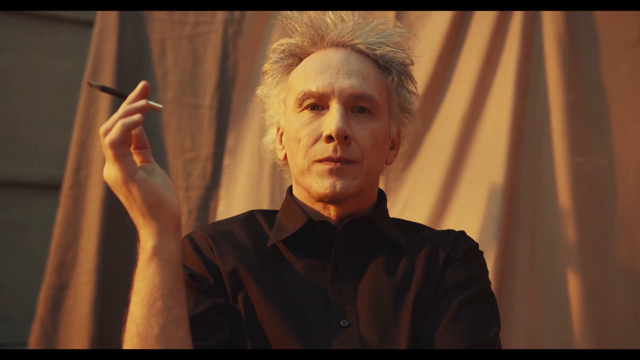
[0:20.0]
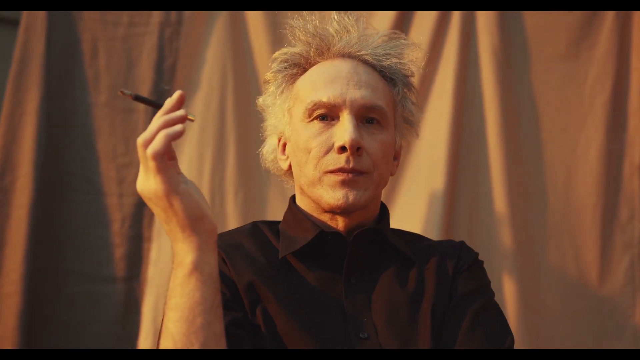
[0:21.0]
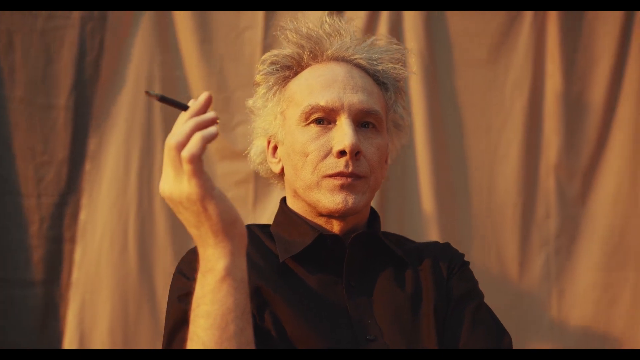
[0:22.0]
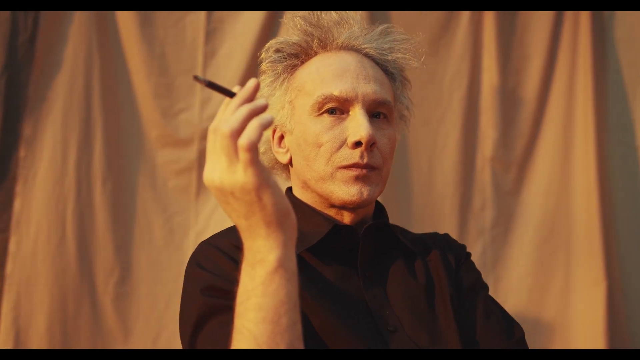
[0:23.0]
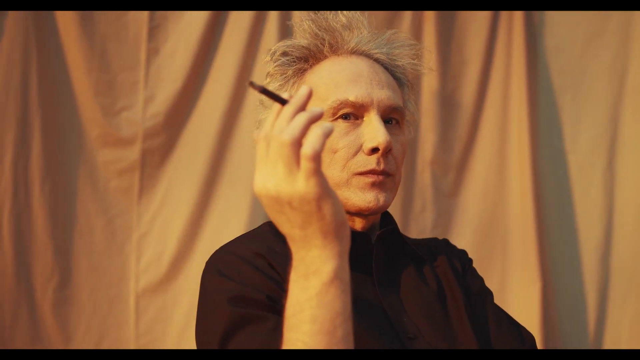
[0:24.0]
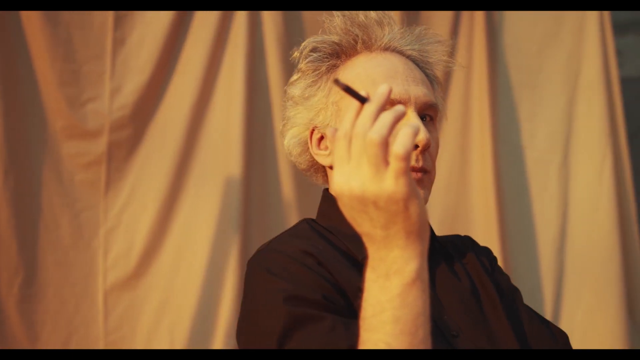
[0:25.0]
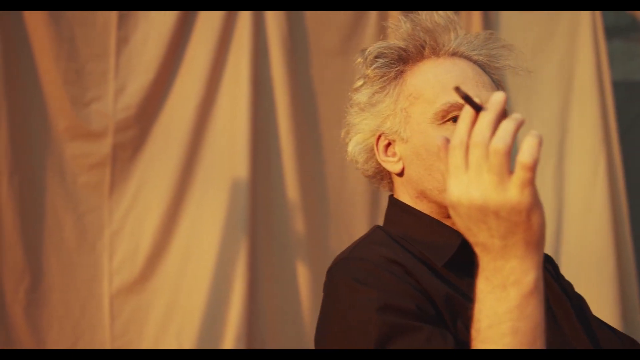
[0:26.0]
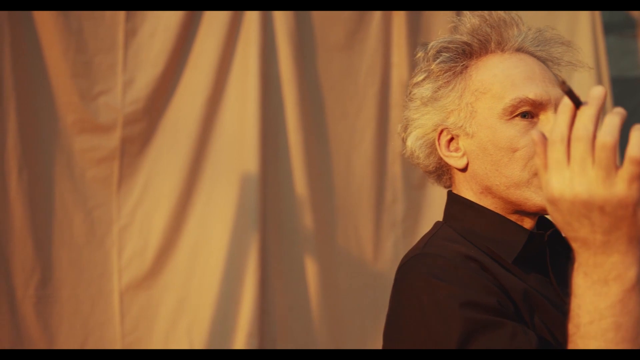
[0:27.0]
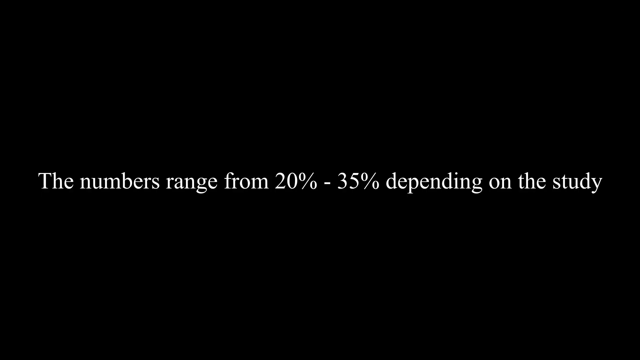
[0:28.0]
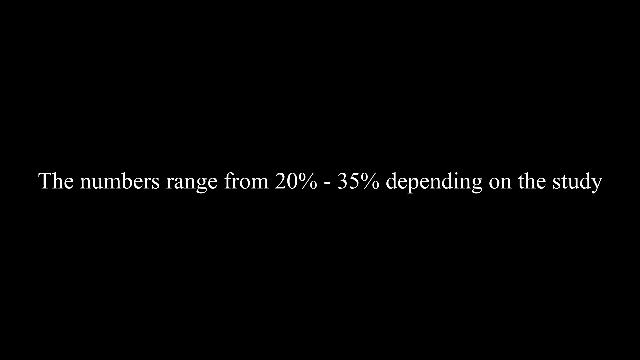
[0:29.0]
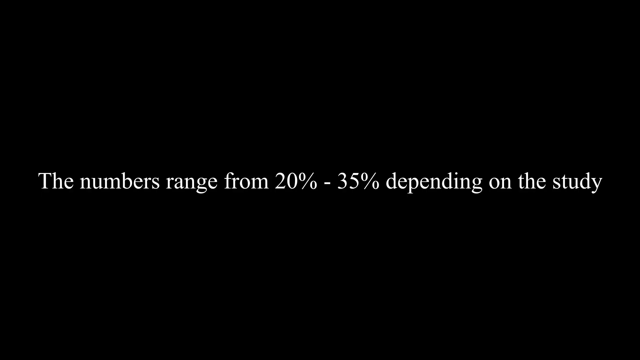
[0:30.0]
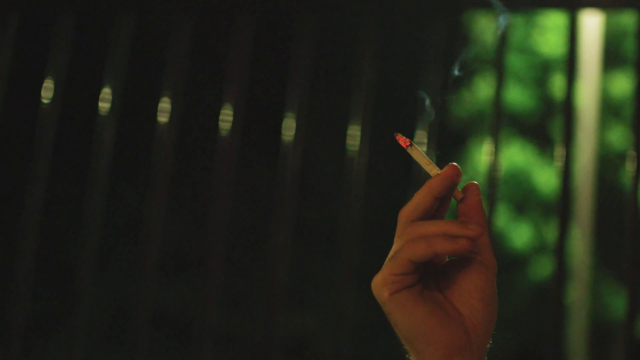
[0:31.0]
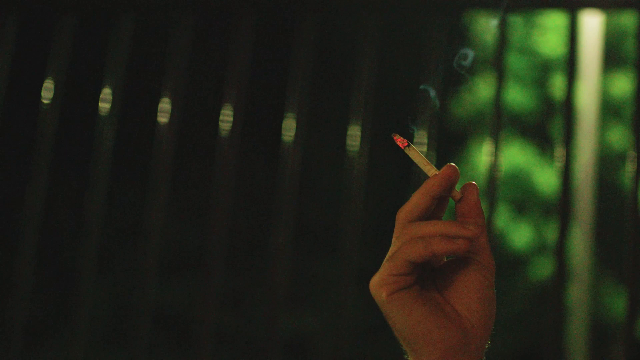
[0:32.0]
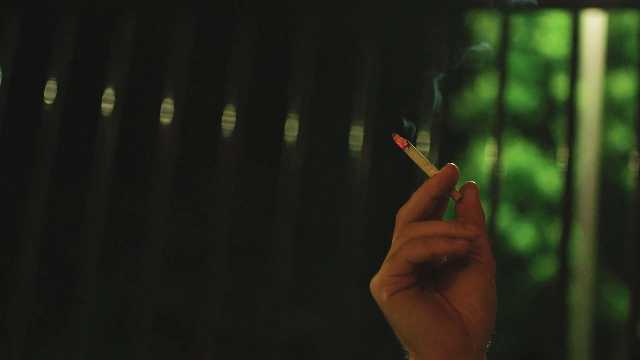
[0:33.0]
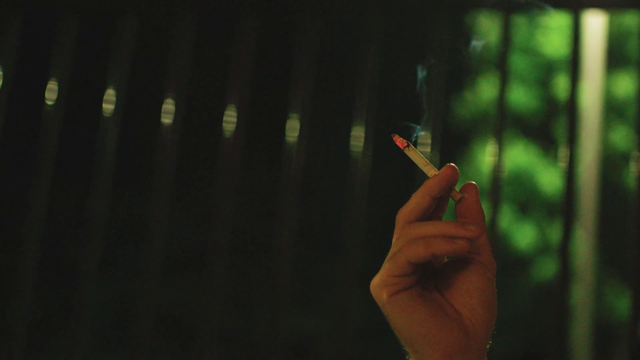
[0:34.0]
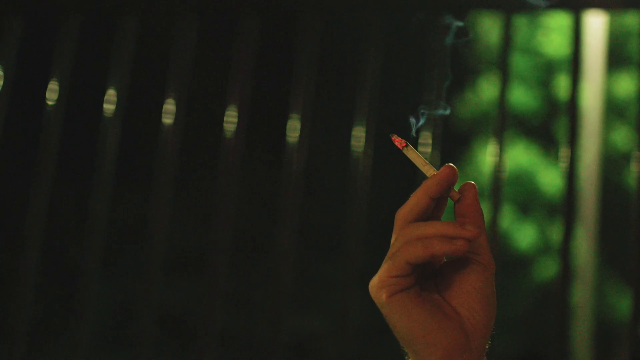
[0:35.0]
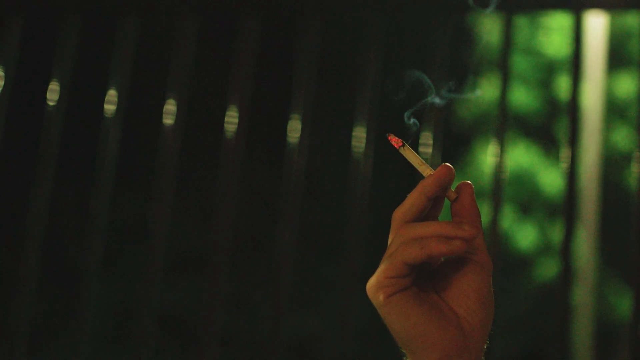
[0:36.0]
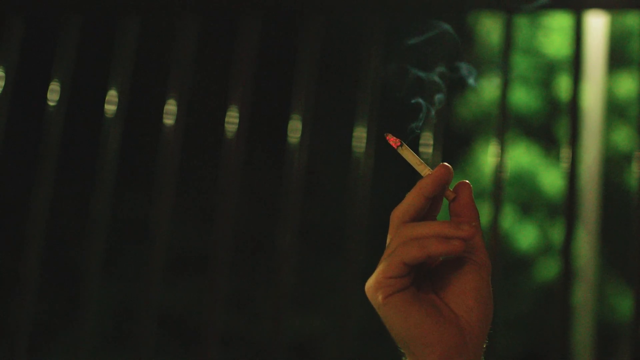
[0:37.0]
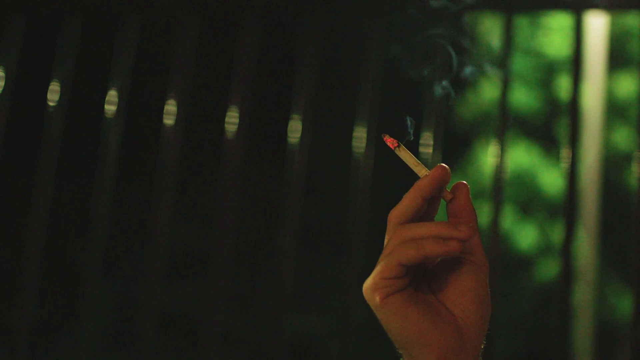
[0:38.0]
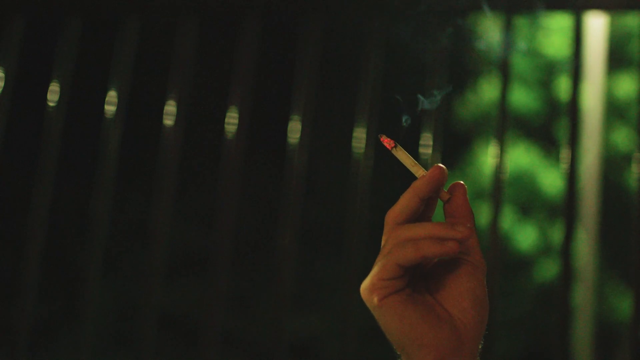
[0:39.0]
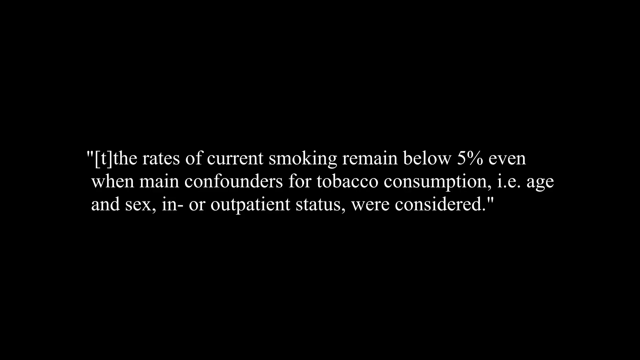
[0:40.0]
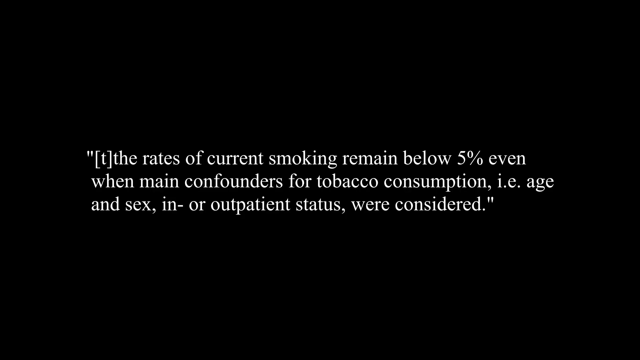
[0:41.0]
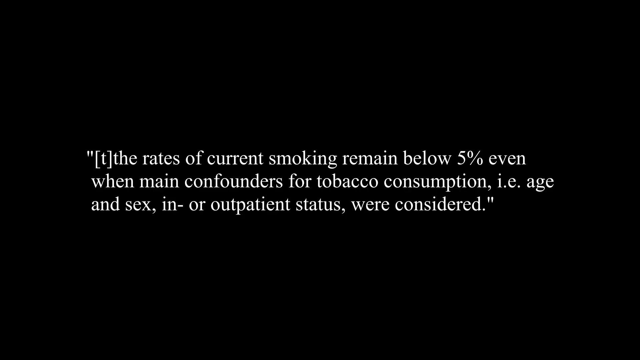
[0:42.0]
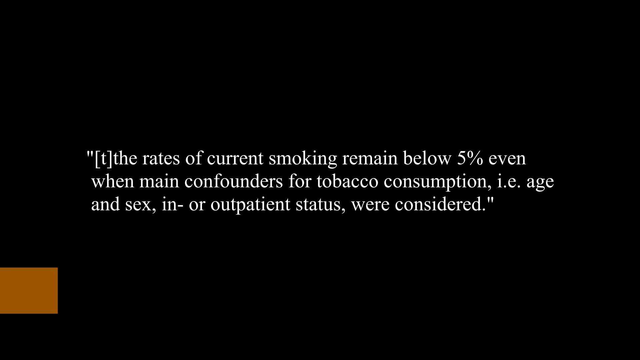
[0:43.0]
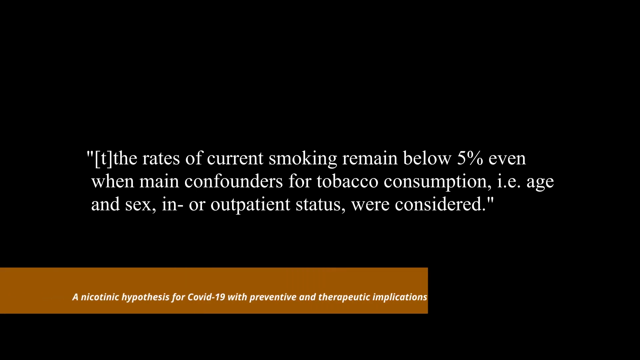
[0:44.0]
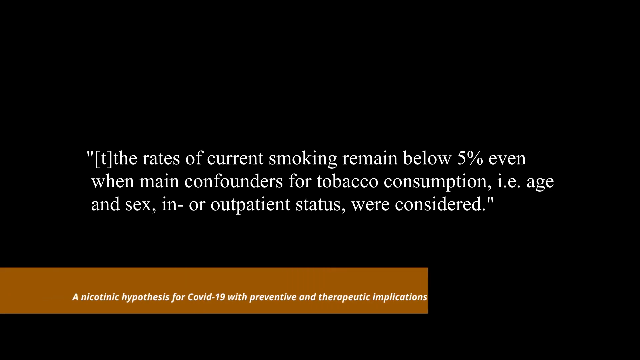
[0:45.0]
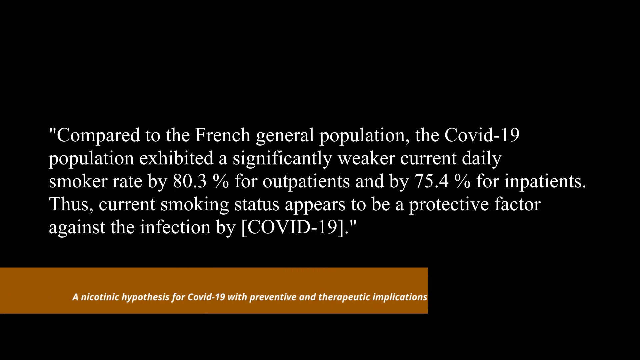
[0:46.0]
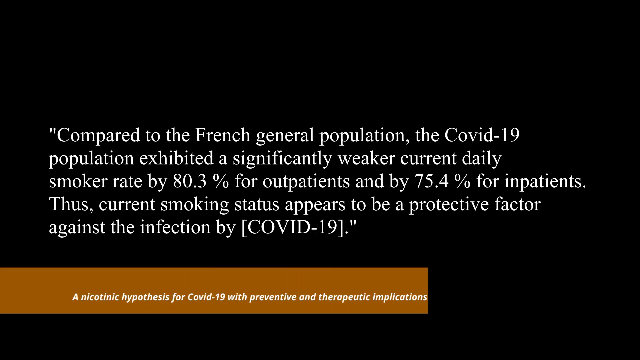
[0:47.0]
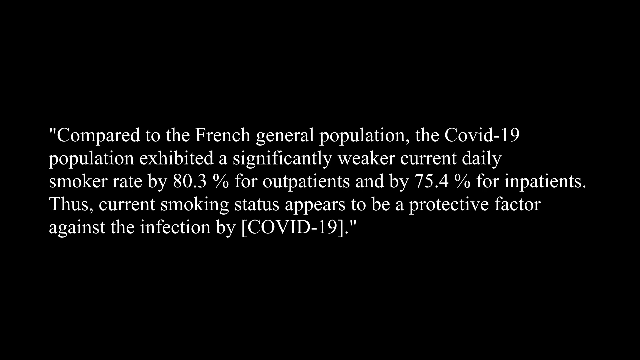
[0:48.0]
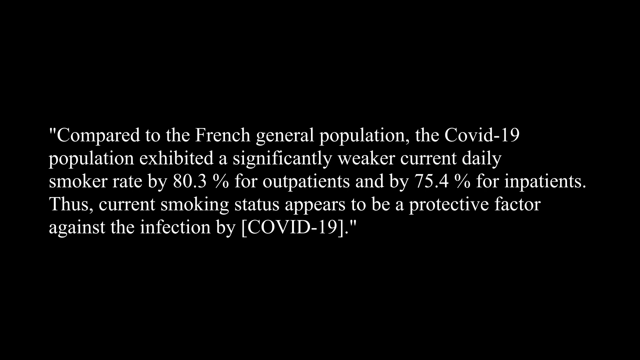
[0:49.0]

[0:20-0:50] The image of the man who looks AI-generated continues, showing his sharp silver hair that sticks up. His right hand is extended and holds a cigarette, and behind him is an amber-colored drop cloth. As the camera pans around to his left side, his eyes follow the camera. The scene changes to a black screen with a white sentence: "The numbers range from 20% to 35%, depending on the study." It stays on the screen for a moment. A motionless right hand holding a lit cigarette appears next, in front of a dark background with a window on the right-hand side through which blurry green leaves are visible. Smoke comes up from the end of the cigarette, but the hand holding it stays motionless. Another black screen with white print follows: "the rates of current smoking remain below 5%, even when main confounders for tobacco consumption, i.e. age and sex, in or outpatient status, were considered." A brown bar with white print at the bottom of the screen then reads "nicotinic hypothesis for COVID-19 with preventive and therapeutic implications." The next black screen with white print reads: "Compared to the French general population, the COVID-19 population exhibited a significantly weaker current daily smoker rate by 80.3% for outpatients and by 75.4% for inpatients. Thus, current smoking status appears to be a protective factor against the infection by COVID-19." The screen then returns to the image of the man.